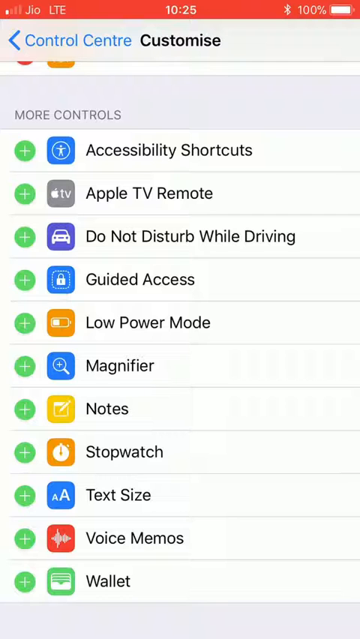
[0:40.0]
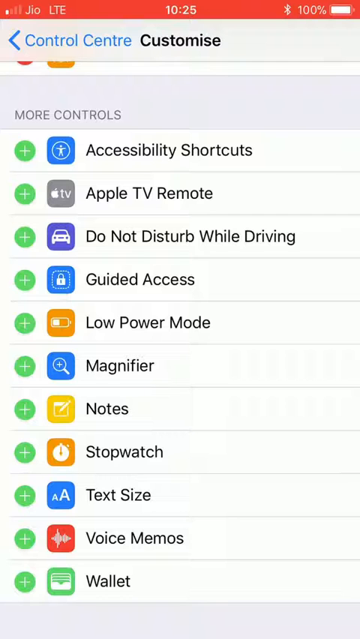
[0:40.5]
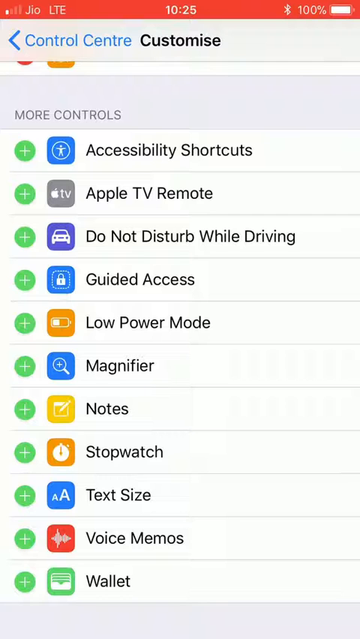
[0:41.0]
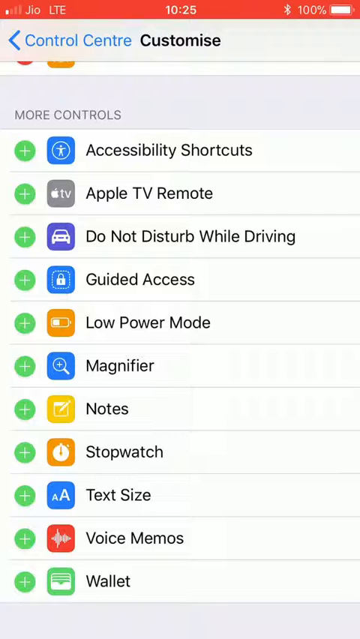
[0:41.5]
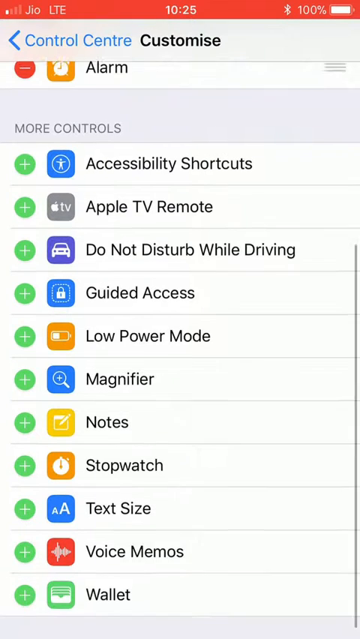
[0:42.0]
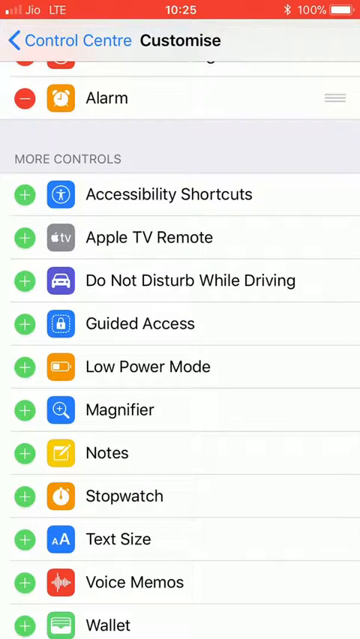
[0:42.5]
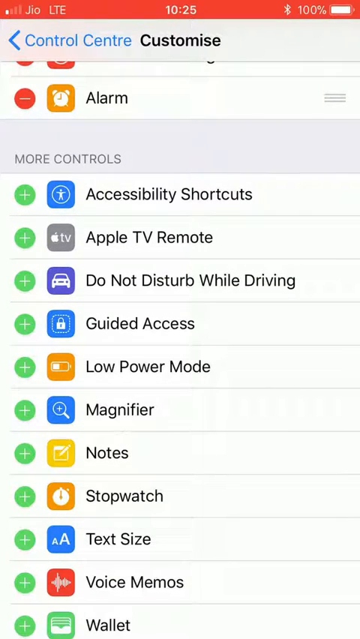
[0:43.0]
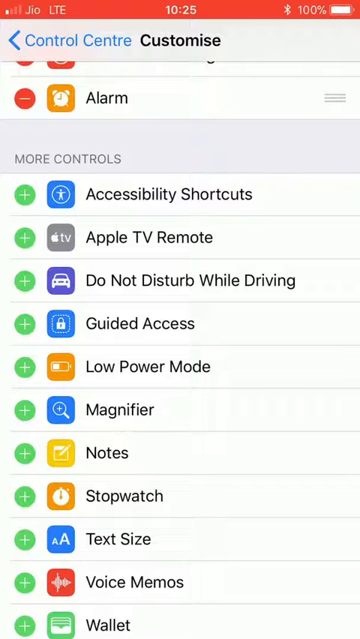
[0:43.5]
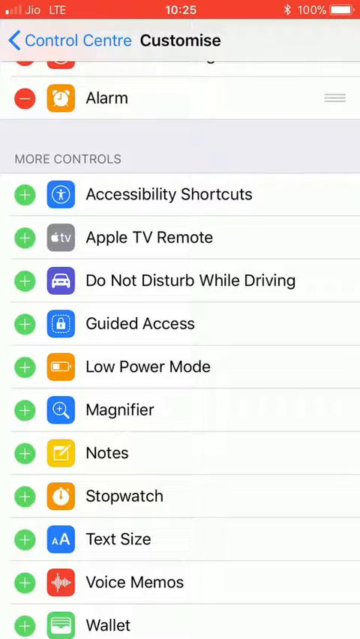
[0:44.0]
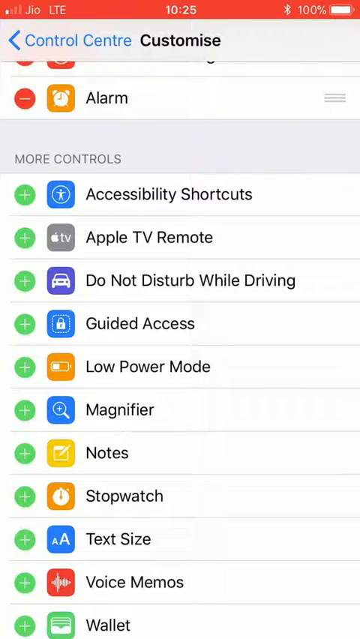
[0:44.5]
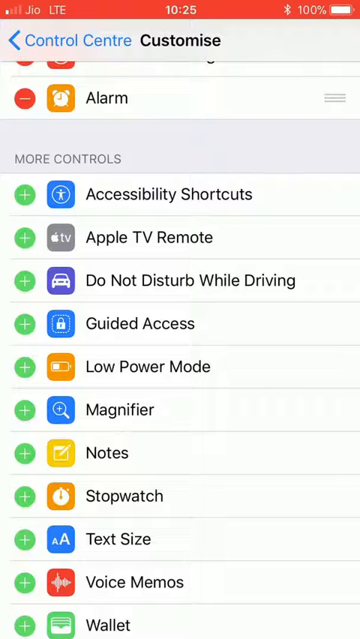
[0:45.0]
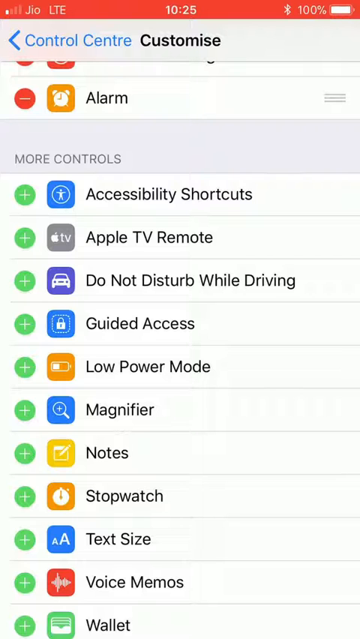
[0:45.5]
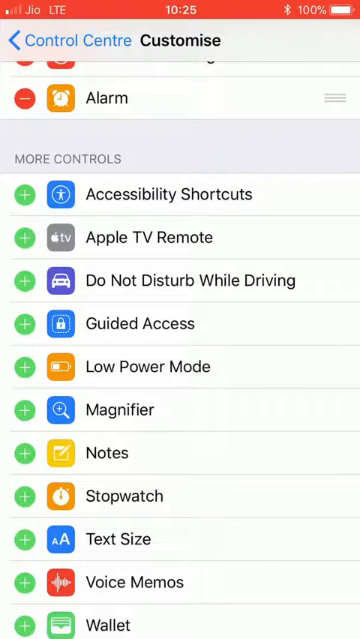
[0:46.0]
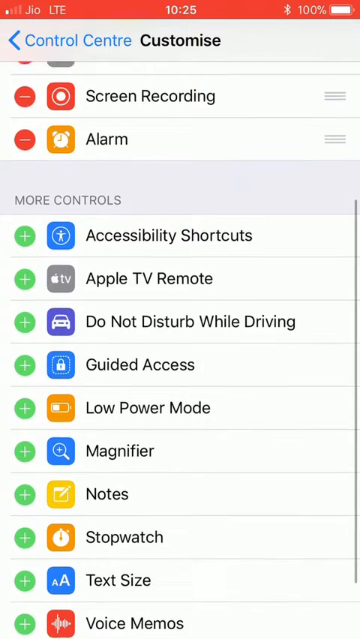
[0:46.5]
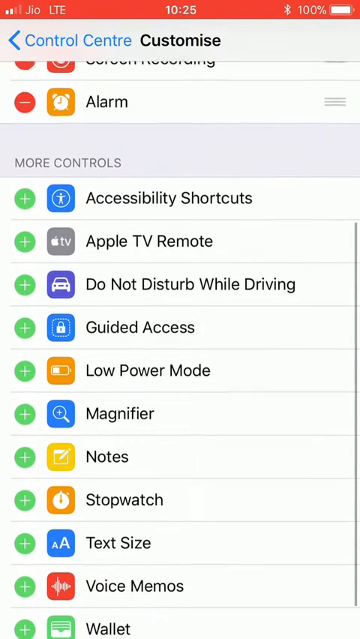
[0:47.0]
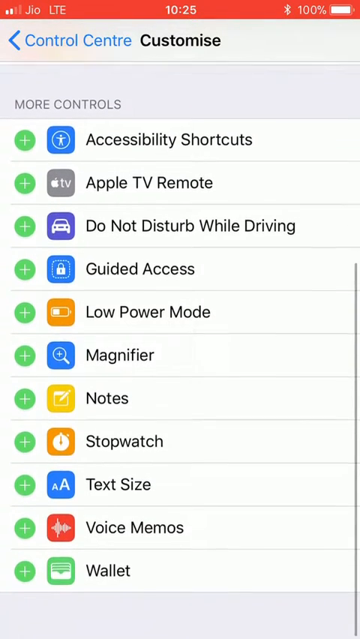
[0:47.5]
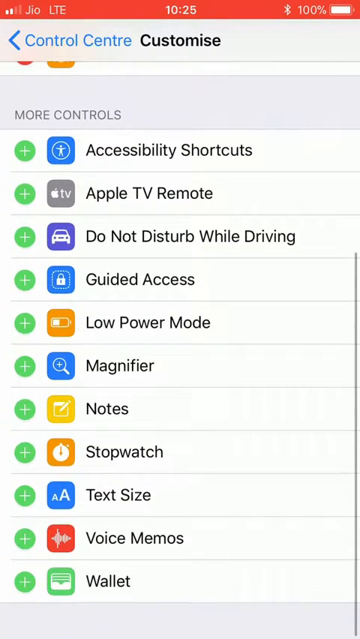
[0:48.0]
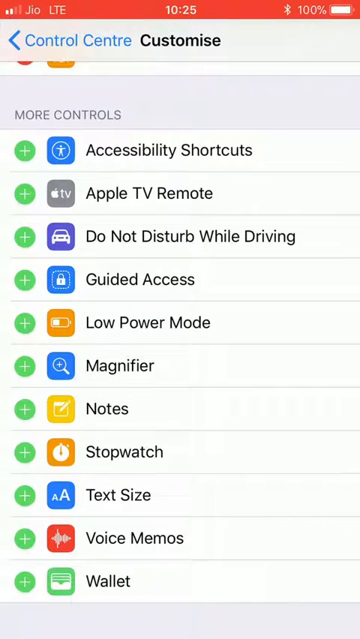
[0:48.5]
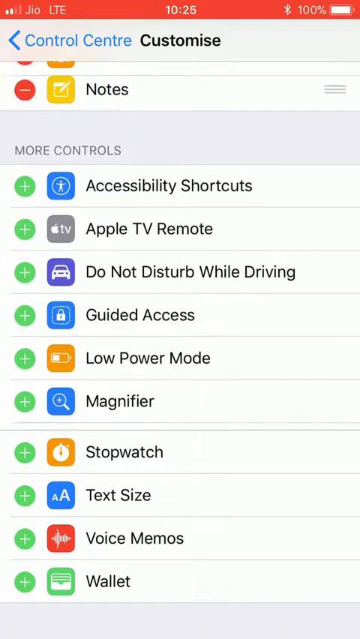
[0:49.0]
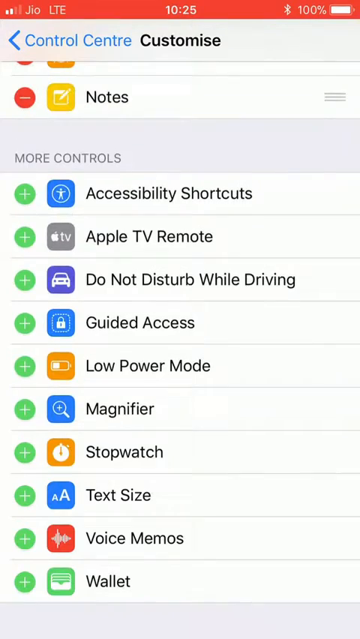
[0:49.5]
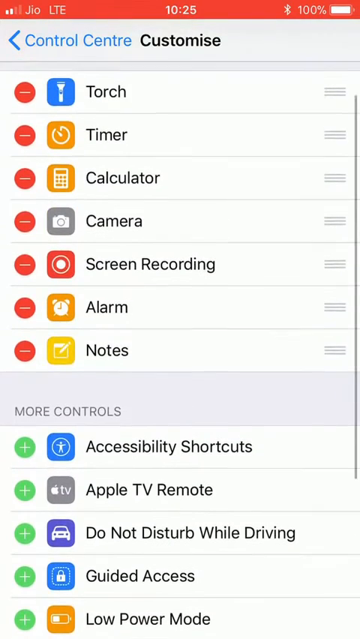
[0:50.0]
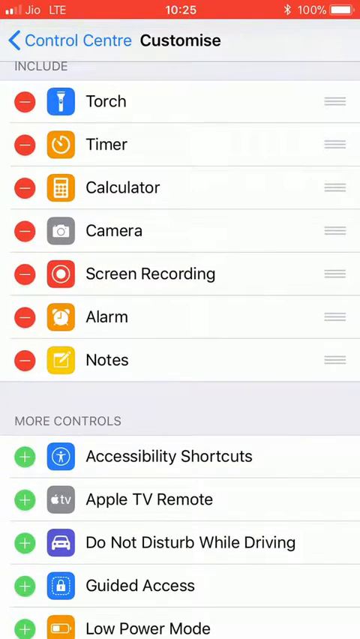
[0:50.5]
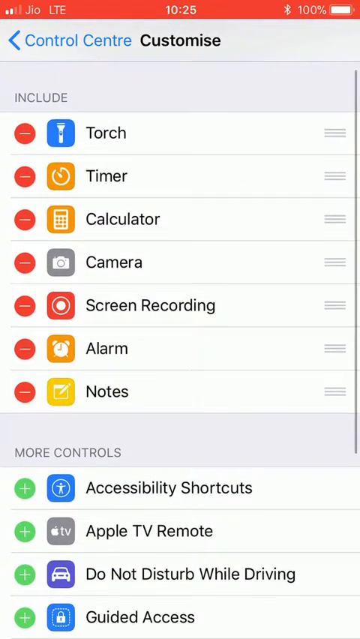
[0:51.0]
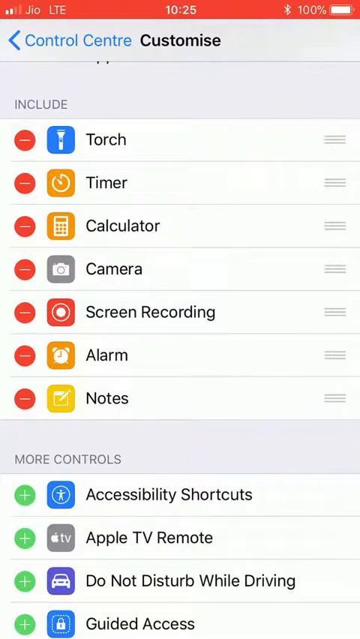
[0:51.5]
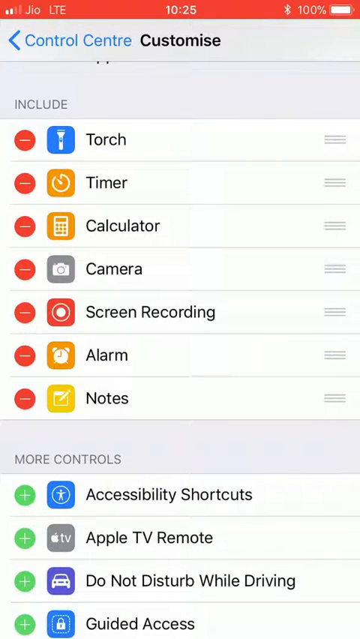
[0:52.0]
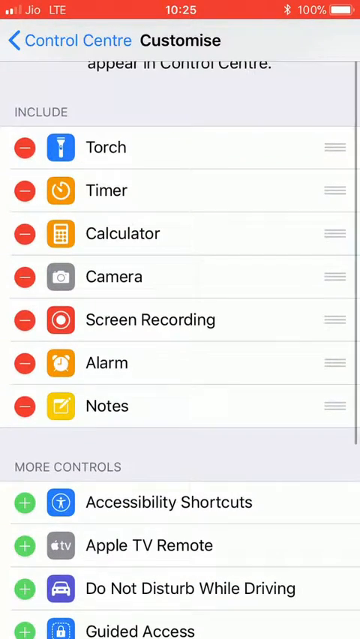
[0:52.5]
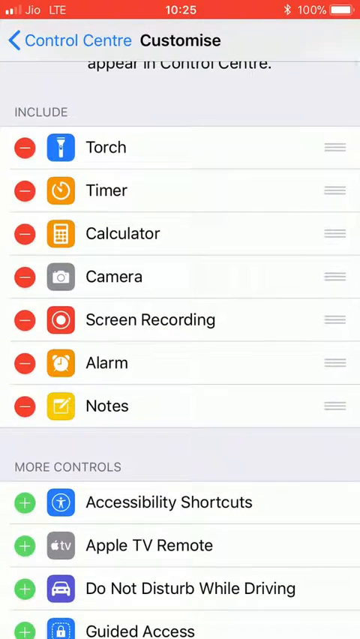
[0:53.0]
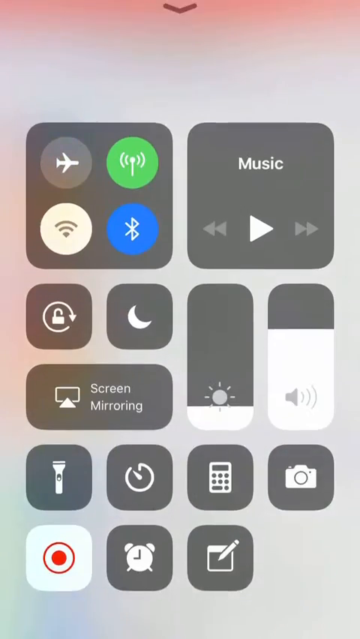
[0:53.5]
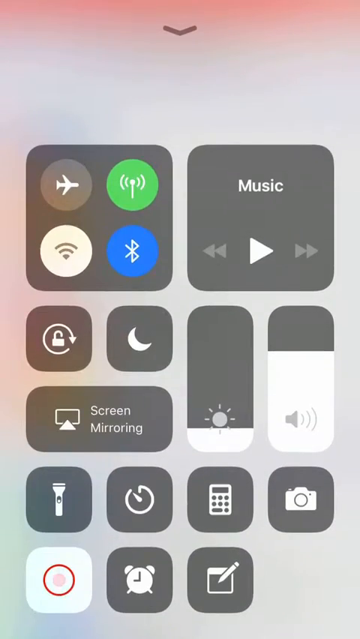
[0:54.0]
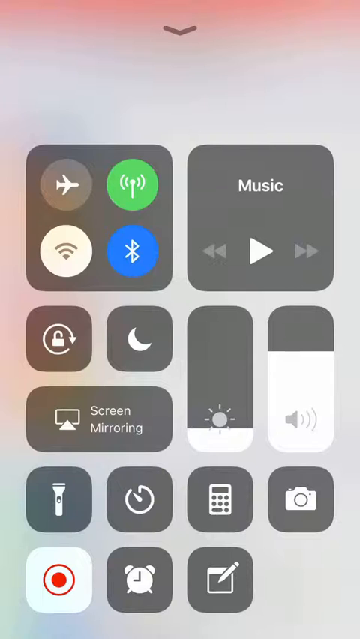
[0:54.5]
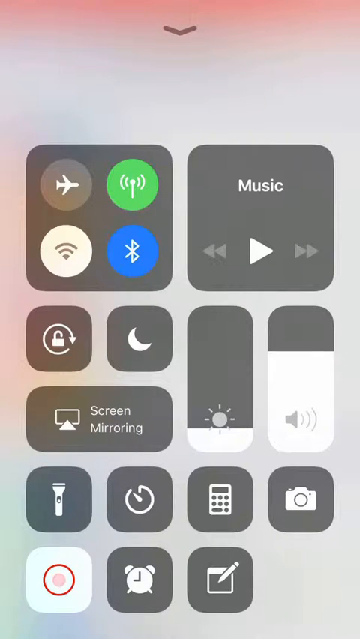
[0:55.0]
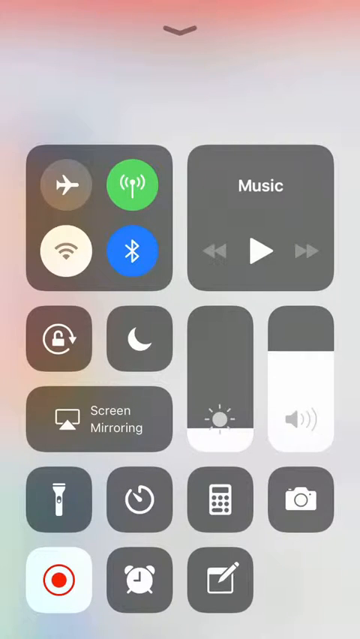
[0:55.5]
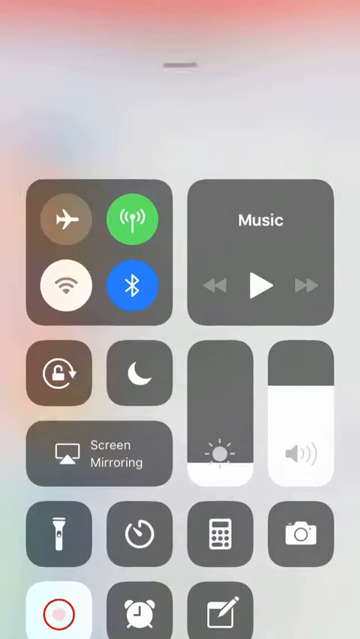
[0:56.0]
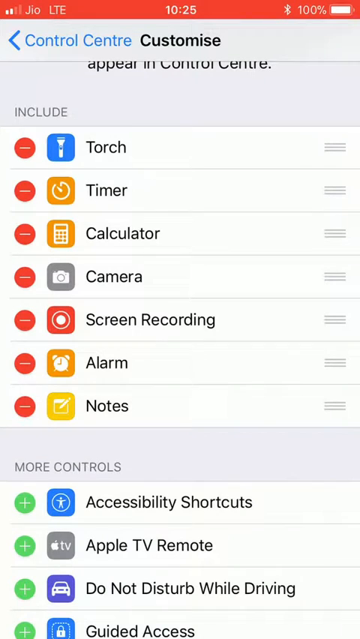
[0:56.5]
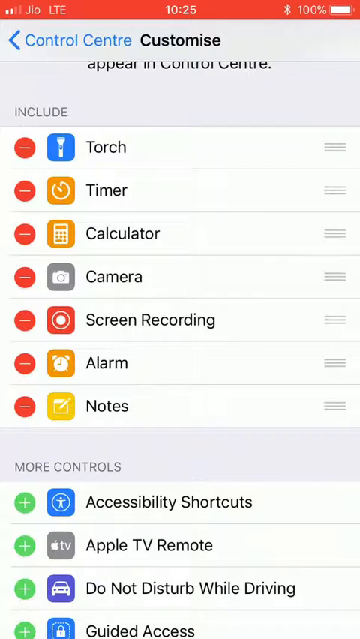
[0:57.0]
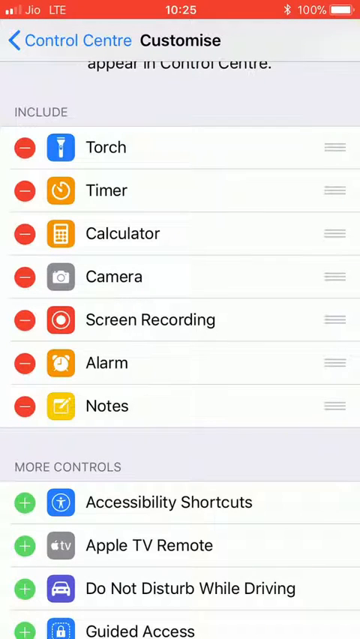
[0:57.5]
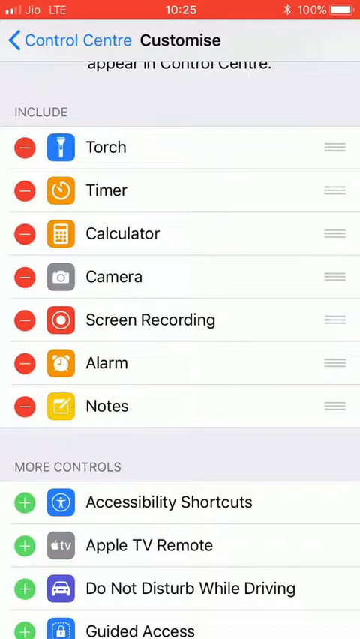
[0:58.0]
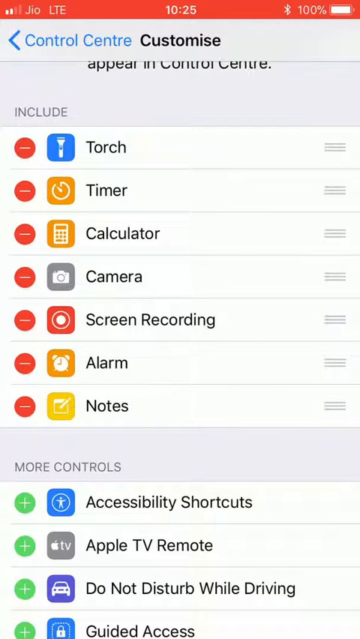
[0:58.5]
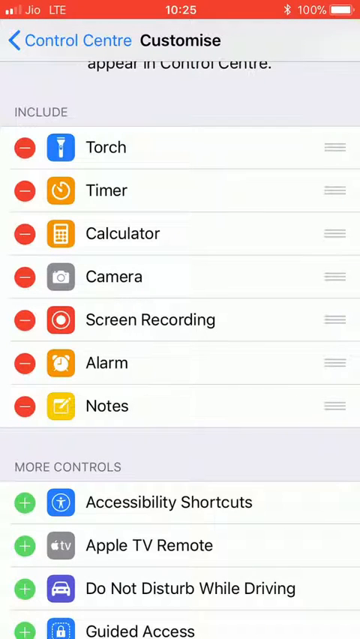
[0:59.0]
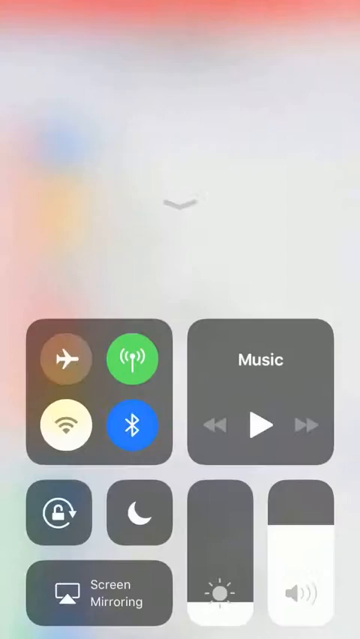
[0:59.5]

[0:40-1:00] The same screen is shown. At the top, "Control Center" appears in blue, while all the other text is black. It says "Customize" and lists "Accessibility Shortcuts, Apple TV Remote, Do Not Disturb While Driving, Guided Access, Low Power Mode, Magnifier, Notes, Stopwatch, Text Size, Voice Memos, Wallet." He scrolls up and down without changing anything, going back up to the other options such as timer and calculator, then down through accessibility shortcuts, Apple TV remote, do not disturb while driving, guided access, low power mode, magnifier, notes, stopwatch, text size and voice memos. On the left-hand side are plus signs, all green. The accessibility shortcuts icon is blue, Apple TV remote gray, do not disturb purple, guided access blue, low power mode orange, magnifier blue, notes yellow, stopwatch orange, text size blue, voice memos red and wallet green.